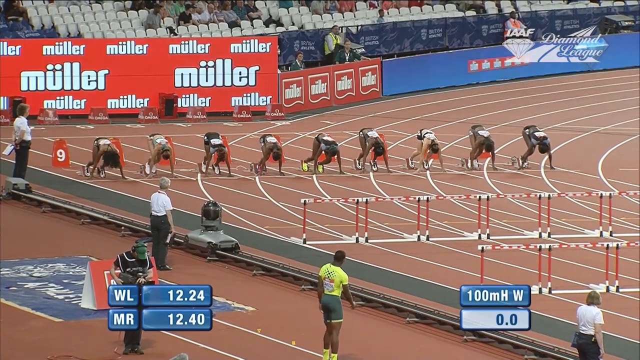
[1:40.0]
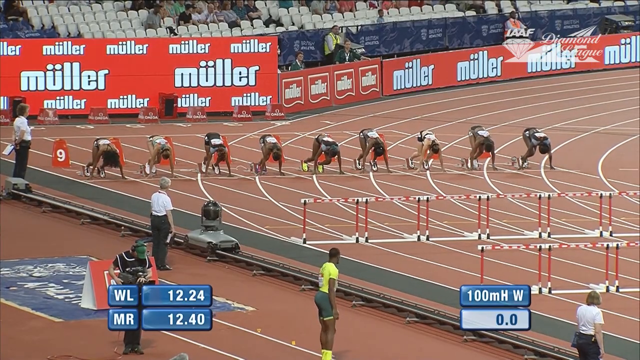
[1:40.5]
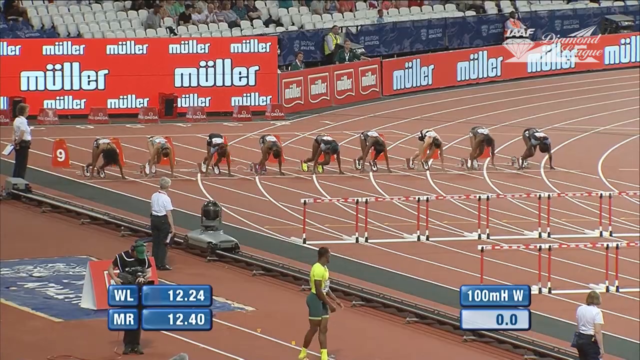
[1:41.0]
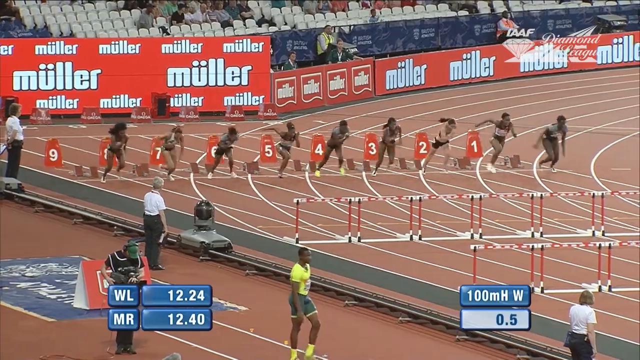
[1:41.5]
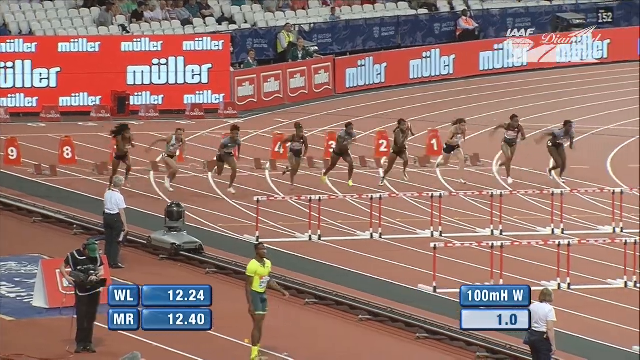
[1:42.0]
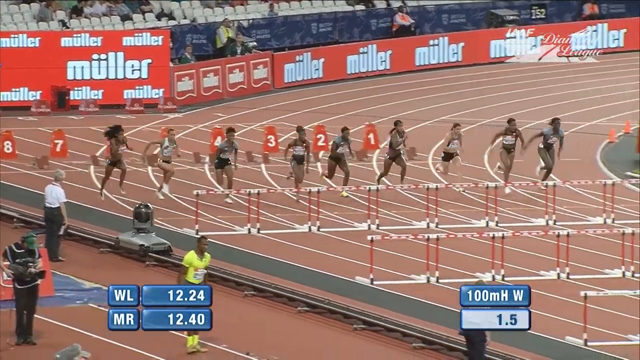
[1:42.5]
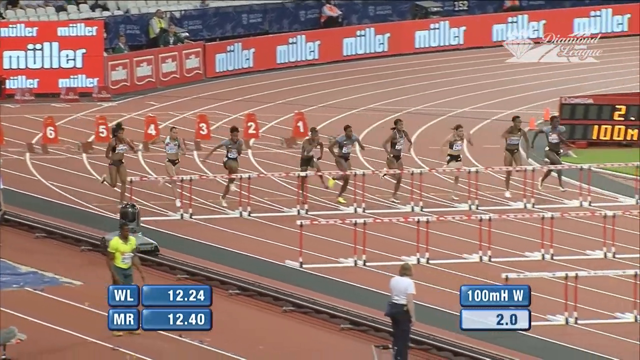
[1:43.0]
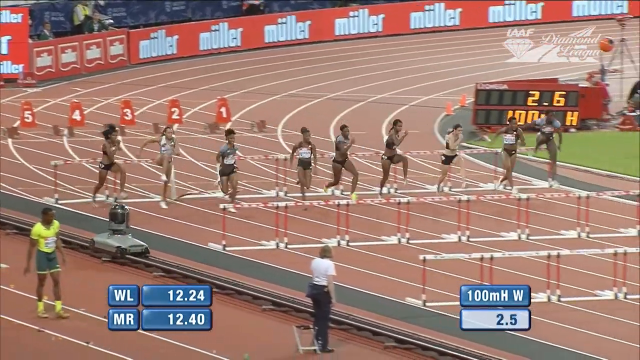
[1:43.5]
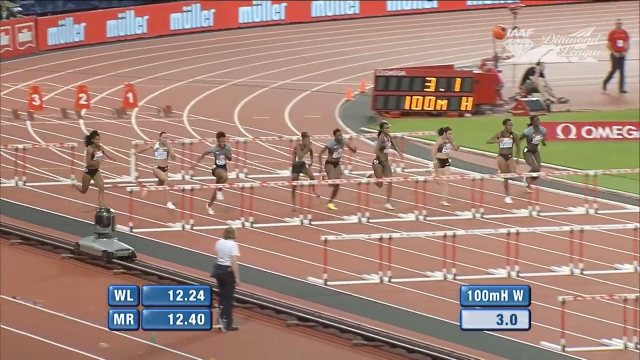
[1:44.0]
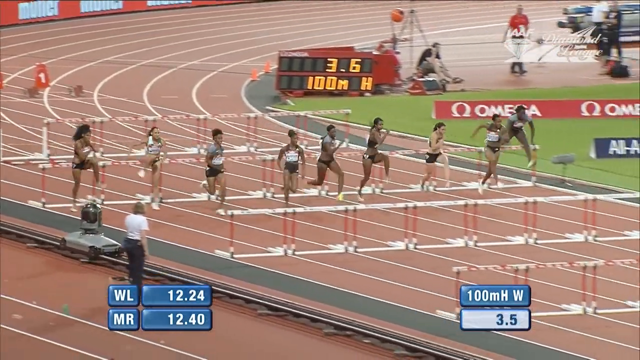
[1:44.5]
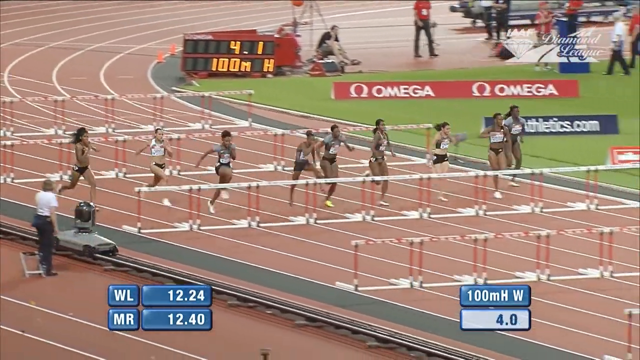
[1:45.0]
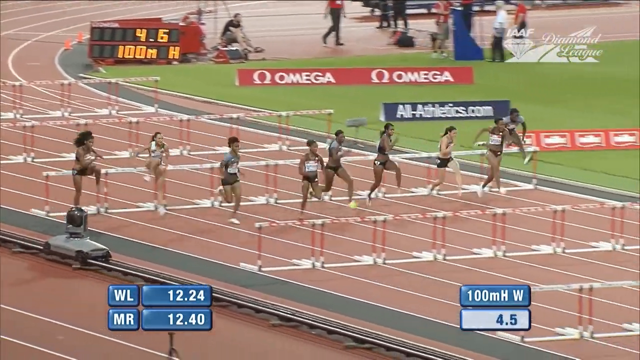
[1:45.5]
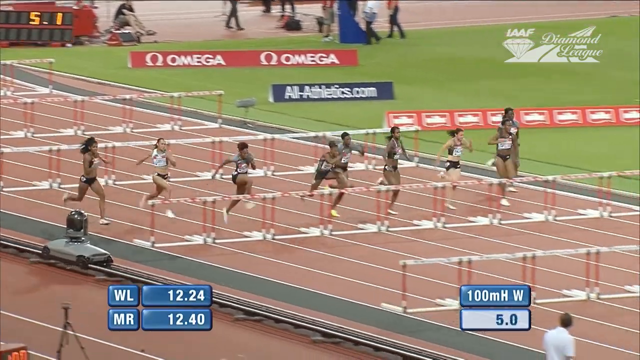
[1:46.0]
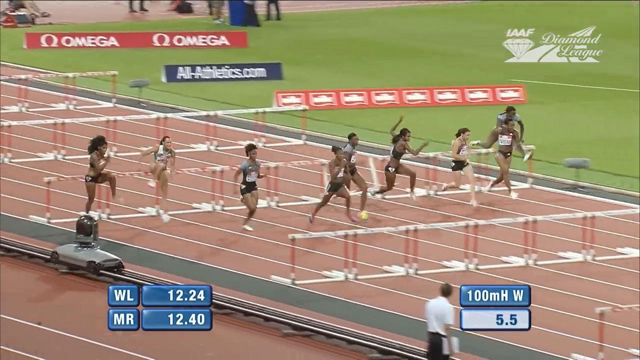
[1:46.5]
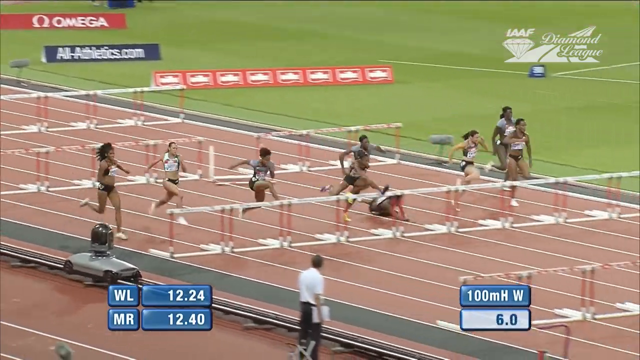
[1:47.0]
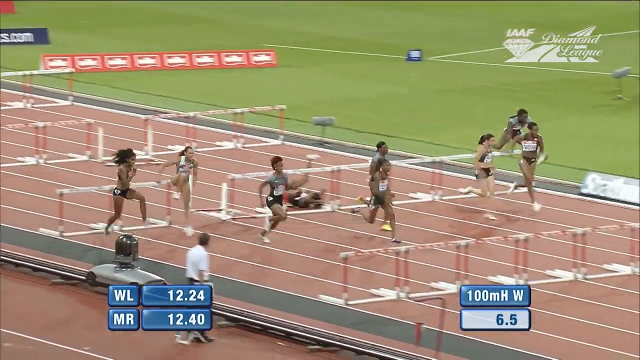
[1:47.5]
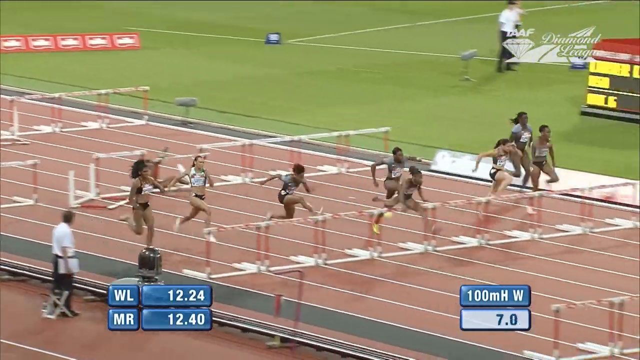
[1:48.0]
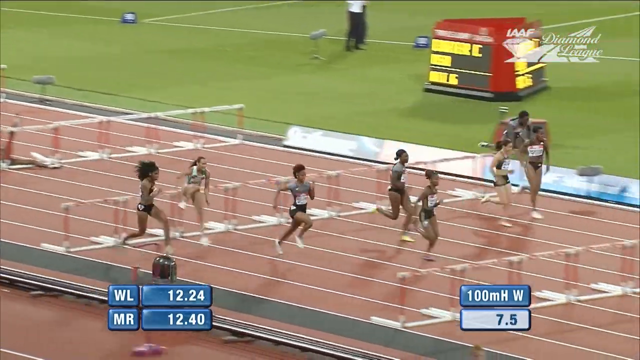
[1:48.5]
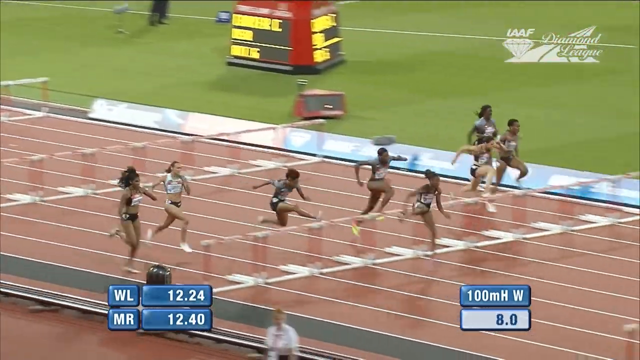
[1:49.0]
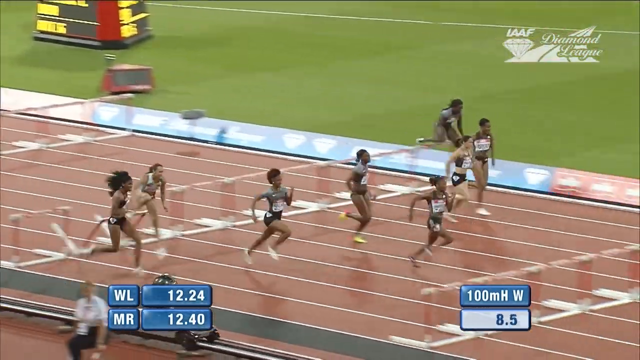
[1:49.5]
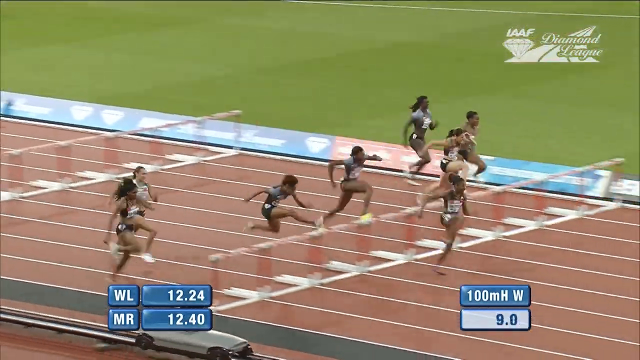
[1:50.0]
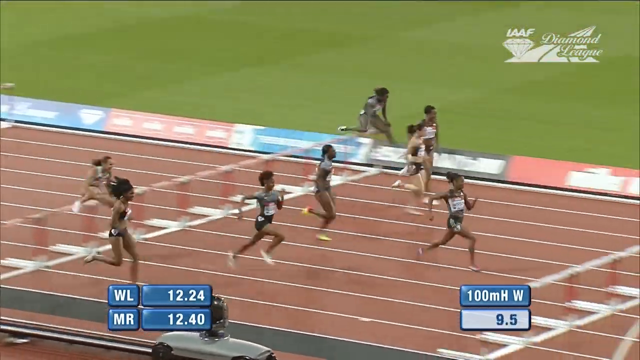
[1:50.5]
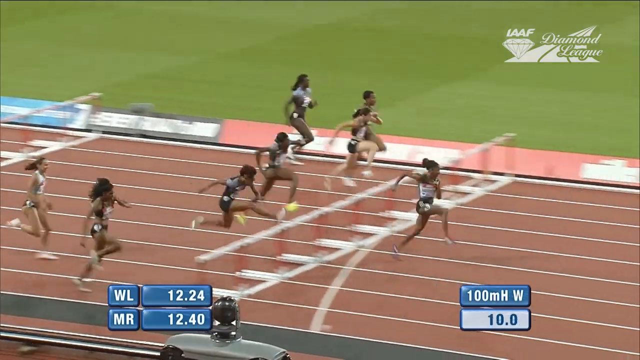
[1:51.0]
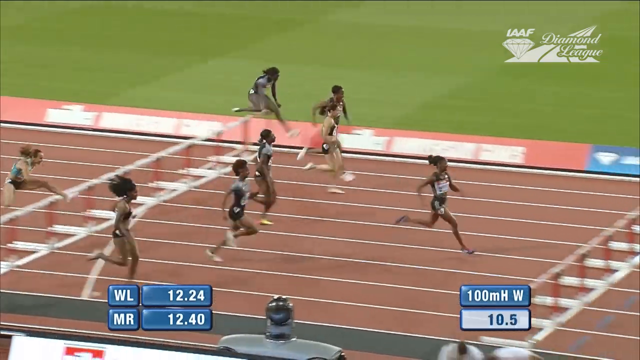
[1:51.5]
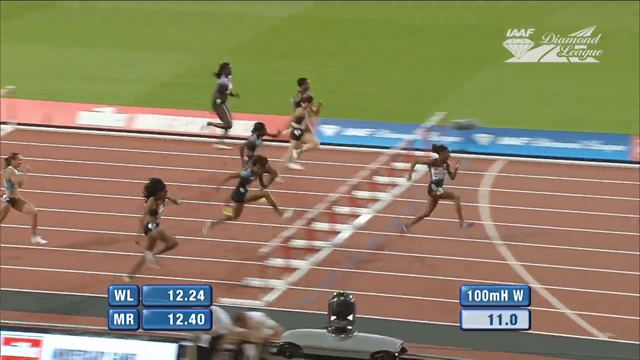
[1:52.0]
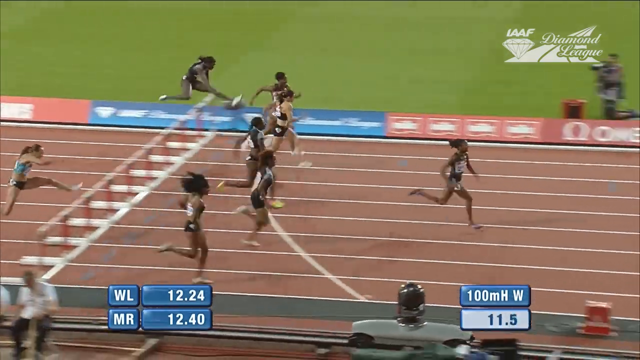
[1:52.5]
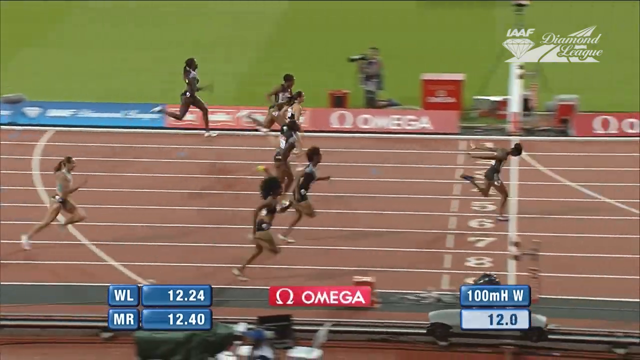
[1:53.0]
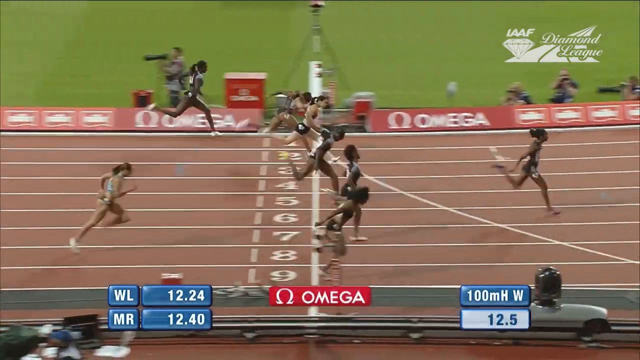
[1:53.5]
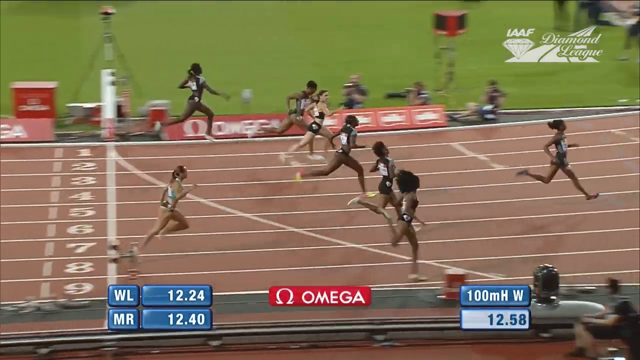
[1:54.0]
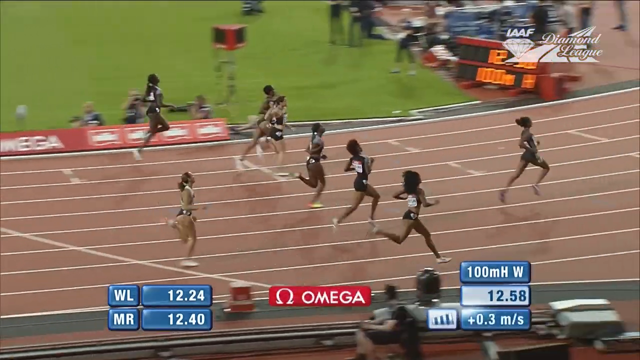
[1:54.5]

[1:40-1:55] The runners start the women's 100 meter hurdle race, and the entire event is shown. The winning time is just over 12.5 seconds. Omega branding is visible on the field behind the runners, and the graphic in the top right of the screen still reads "IAAF Diamond League". During the race, one of the runners slips and falls over a hurdle, and the coverage continues into the post-race.